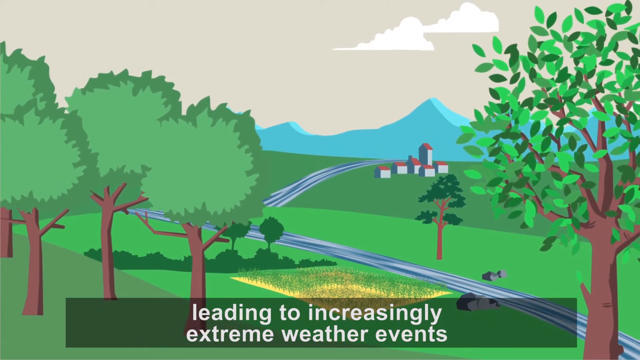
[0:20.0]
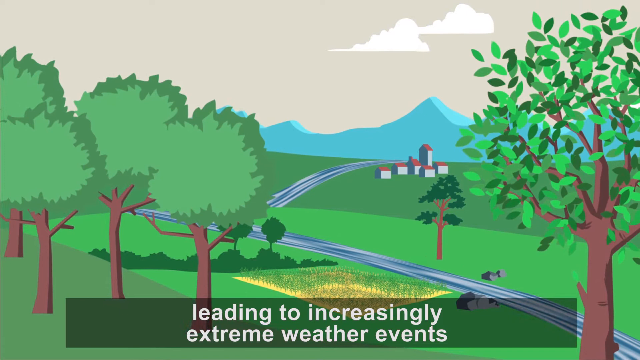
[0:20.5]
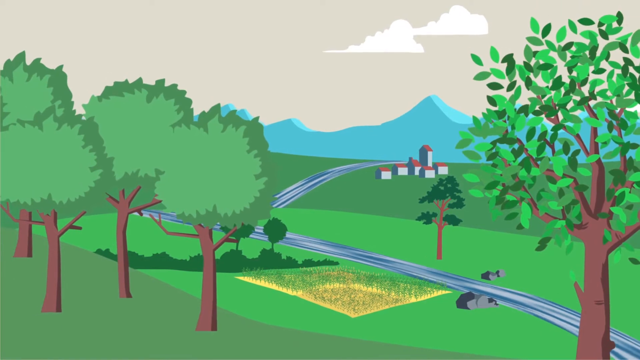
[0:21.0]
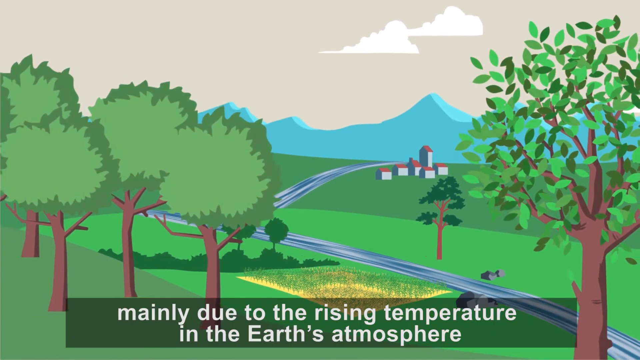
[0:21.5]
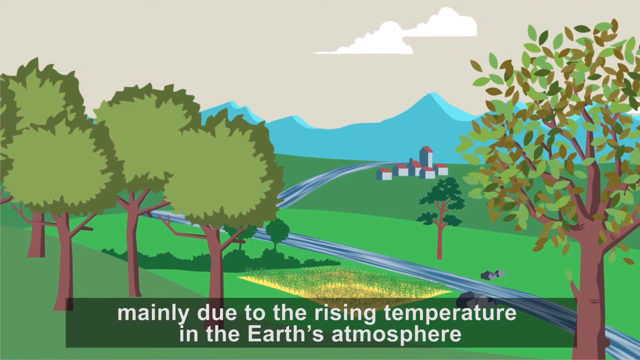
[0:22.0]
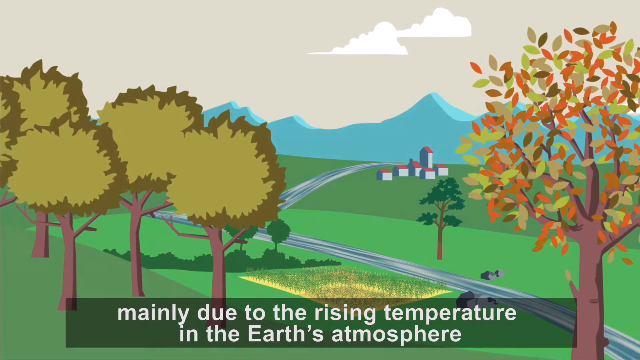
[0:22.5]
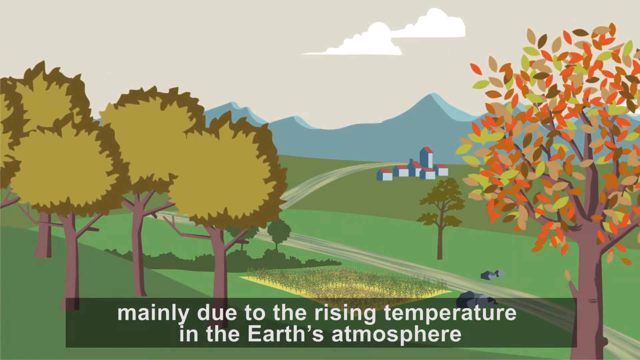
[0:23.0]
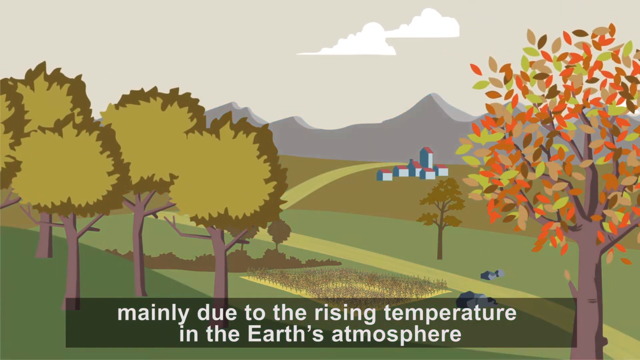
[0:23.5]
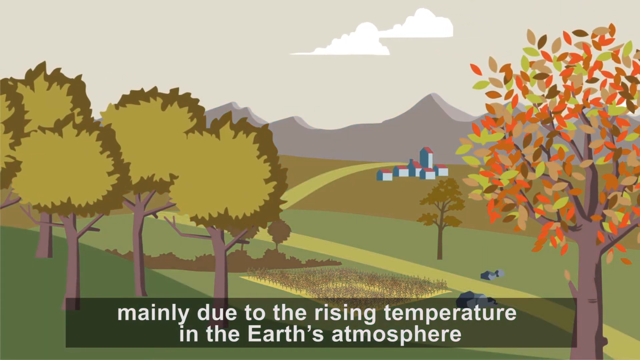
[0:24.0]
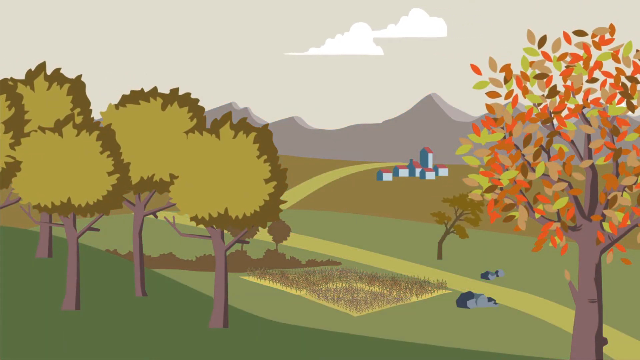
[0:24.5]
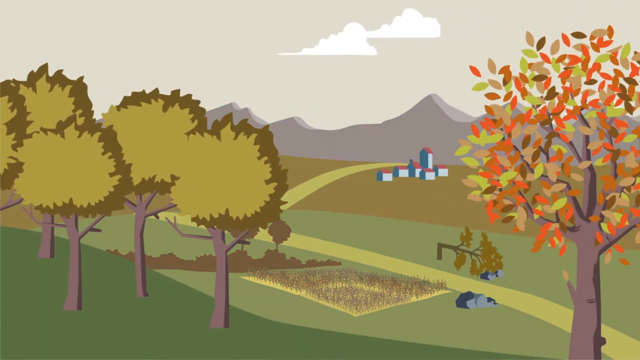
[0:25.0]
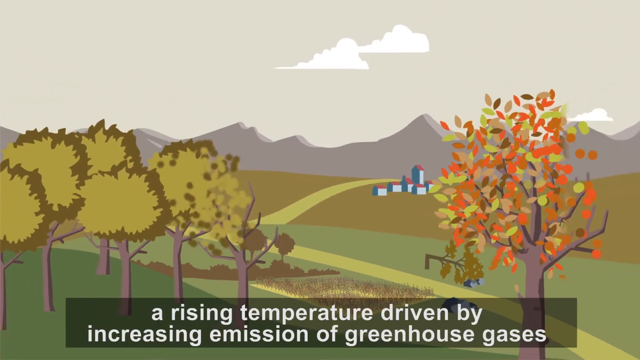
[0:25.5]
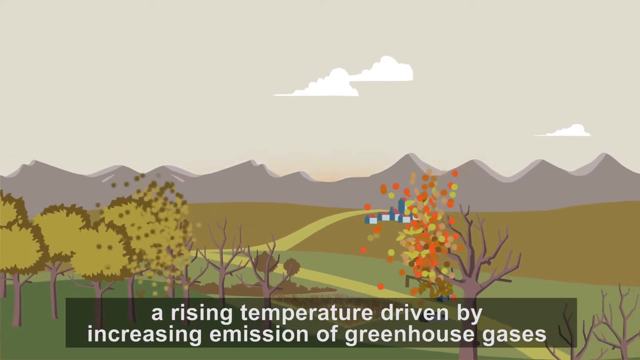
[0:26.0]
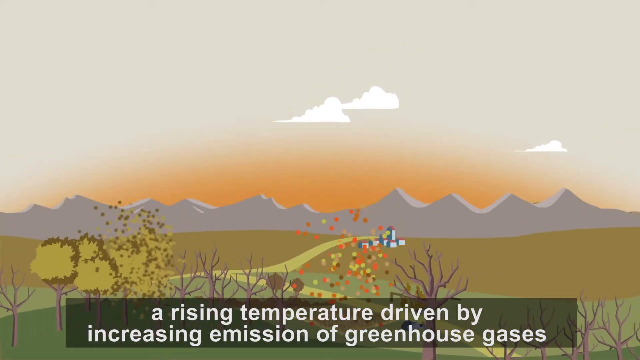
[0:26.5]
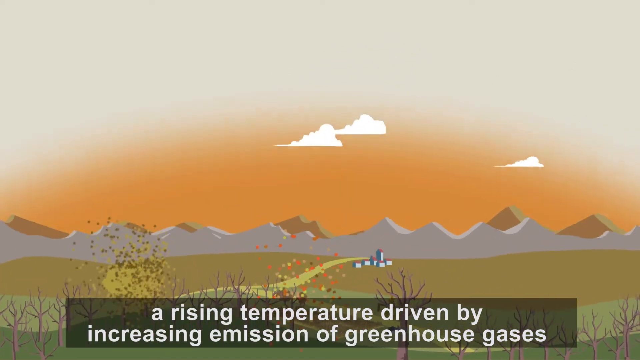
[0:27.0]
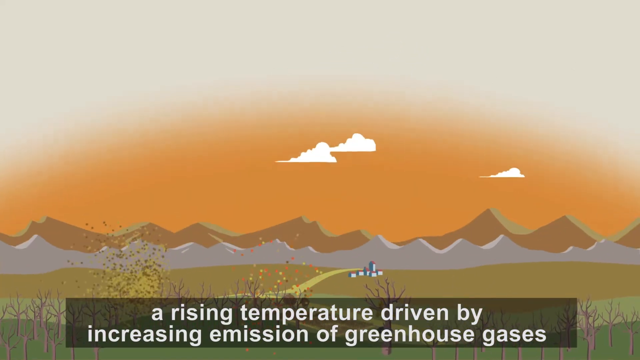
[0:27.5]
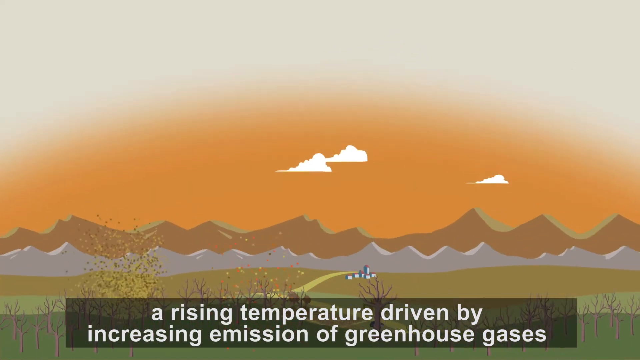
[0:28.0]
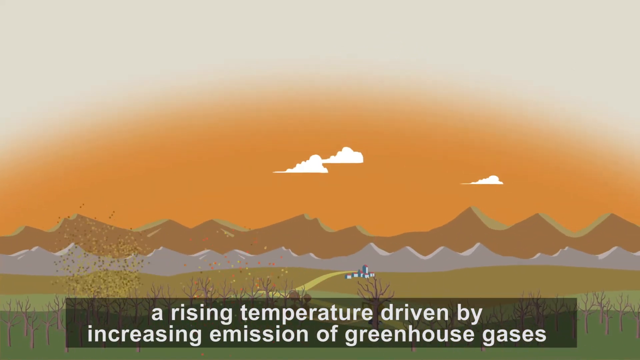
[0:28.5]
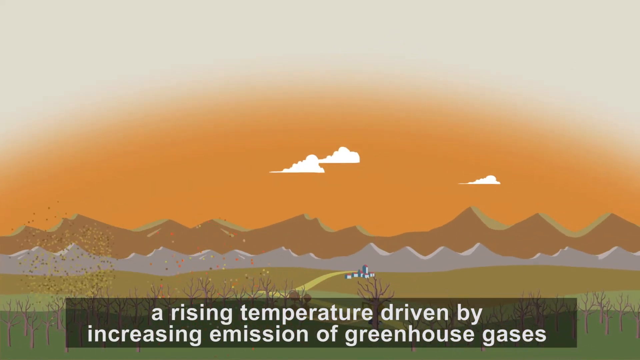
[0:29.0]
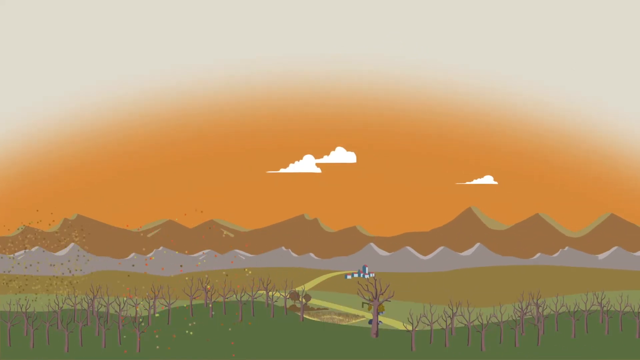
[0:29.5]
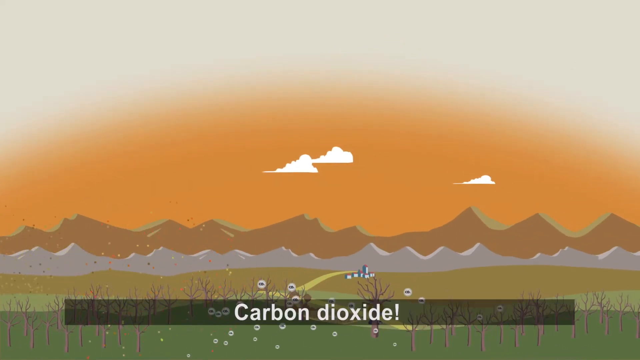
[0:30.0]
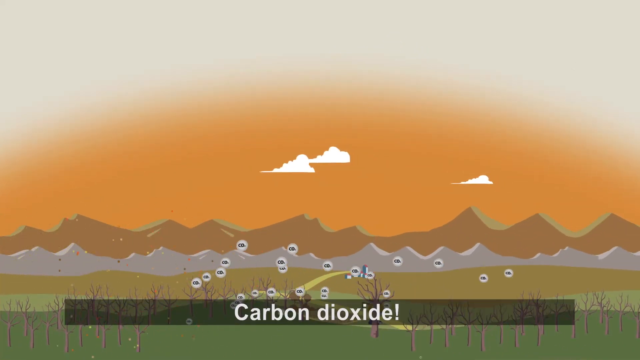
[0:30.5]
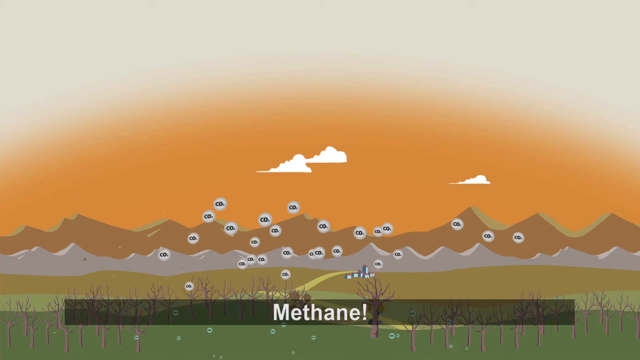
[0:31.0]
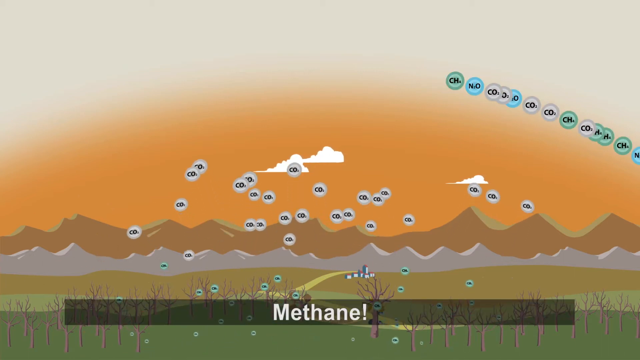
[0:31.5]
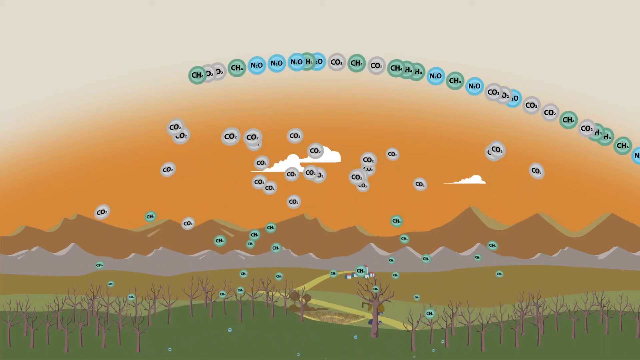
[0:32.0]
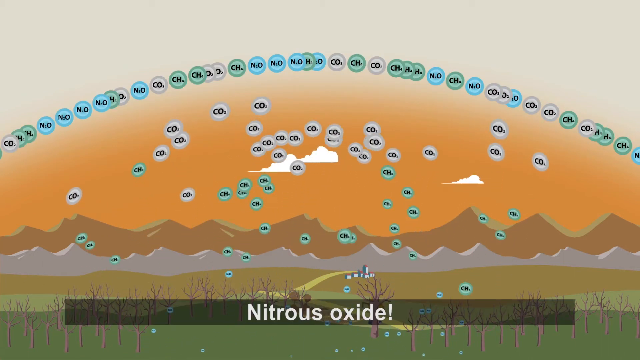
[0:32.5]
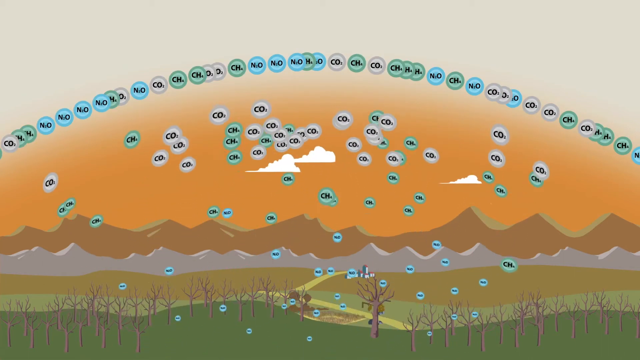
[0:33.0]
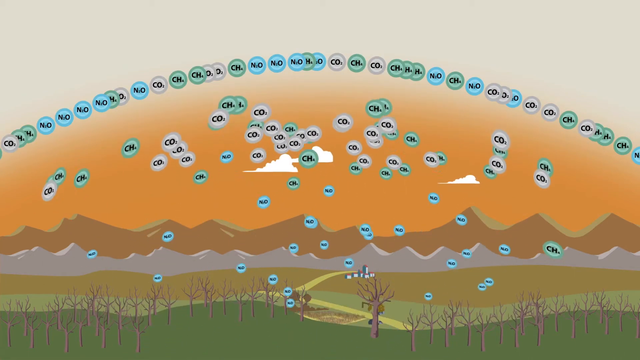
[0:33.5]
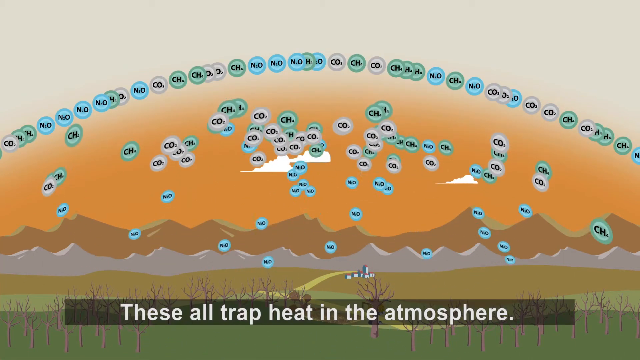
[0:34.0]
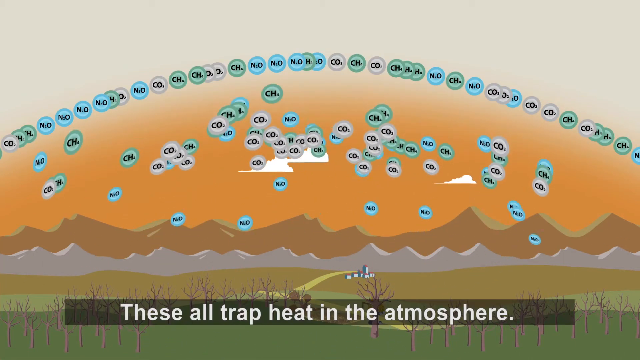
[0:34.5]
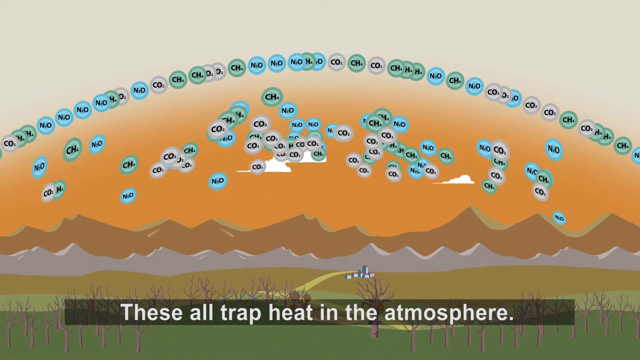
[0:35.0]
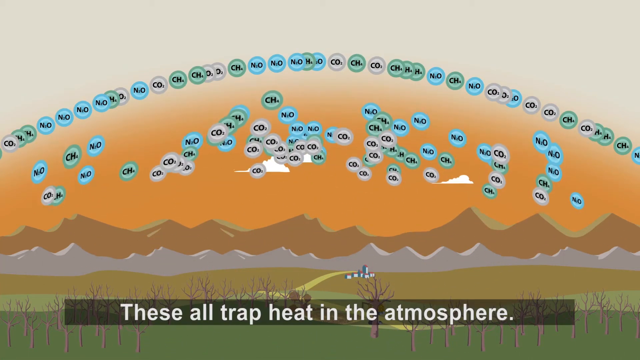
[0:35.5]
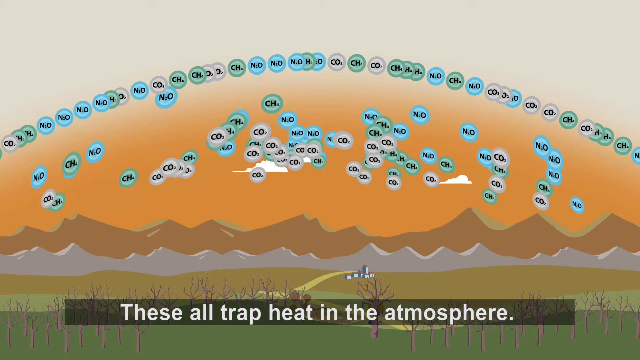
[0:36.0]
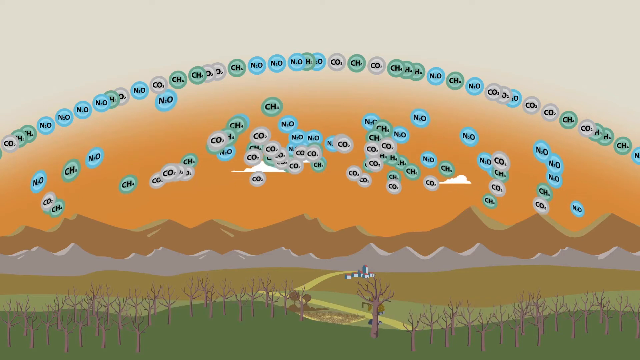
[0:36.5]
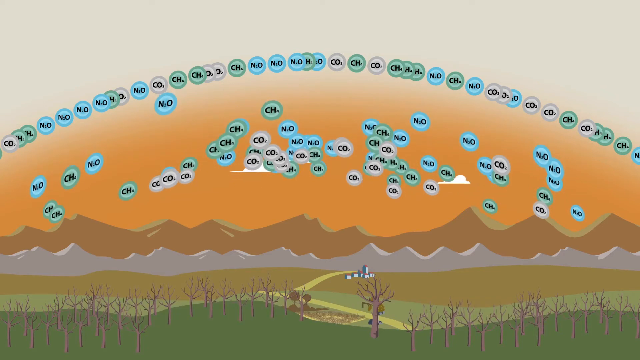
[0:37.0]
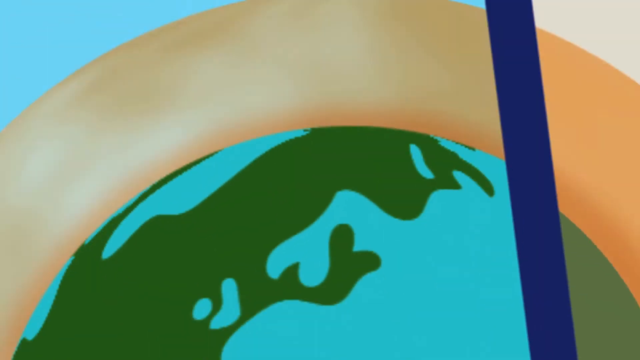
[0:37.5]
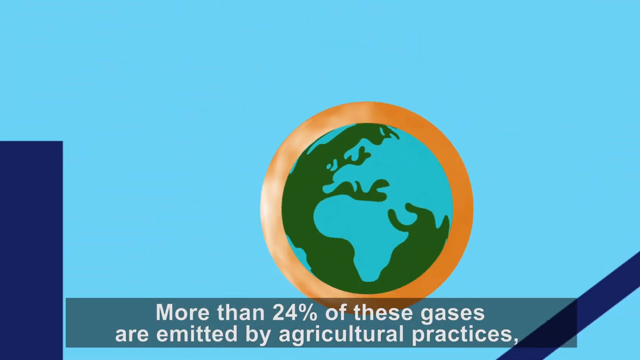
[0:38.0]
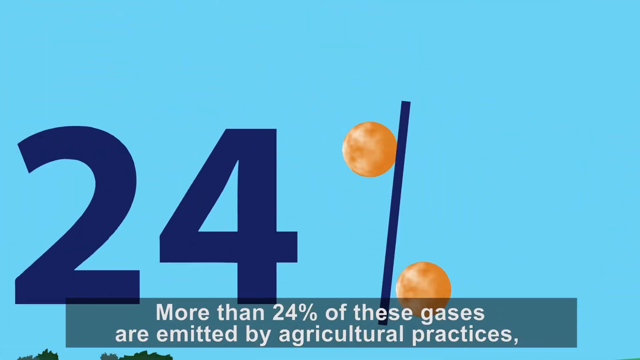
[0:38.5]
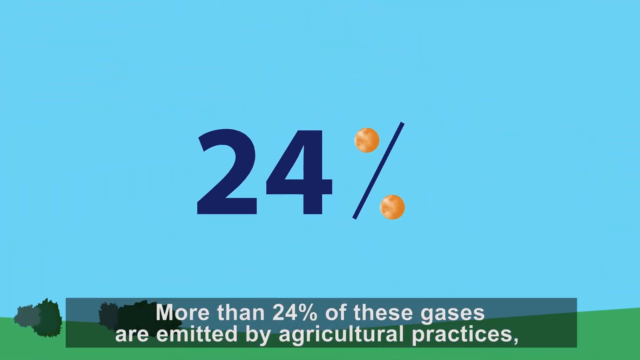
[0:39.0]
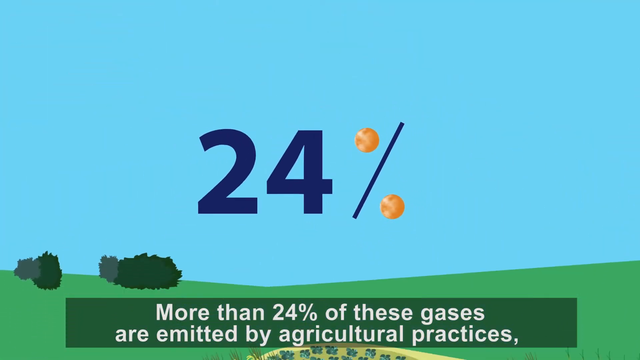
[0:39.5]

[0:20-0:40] The sky is beige, with two clouds toward the right-hand side that are parallel to one another. Trees are visible: those on the right side show oval-shaped leaves, while the one on the left looks bushy. In the background are about six buildings with red roofs and grayish walls, and a stream runs through the scene, almost perpendicular. White text at the bottom reads "leading to increasingly extreme weather events mainly due to the rising temperature in the Earth's atmosphere." As that text appears, the seasons change: the leaves on the left become brownish, and the leaves on the right turn different shades of brown, yellow, red and orange, as does the grass. Text reads "a rising temperature driven by increasing emission of greenhouse gases." The sky turns orange, and a number of differently coloured bubbles appear, labelled CO and CH; the CH bubble is green and the word "methane" appears. The CH, CO and NO bubbles form an arch, with the NO bubbles, possibly nitrogen oxide, in blue. Text reads "These all trap heat in the atmosphere. More than 24% of these gases are emitted by agricultural".